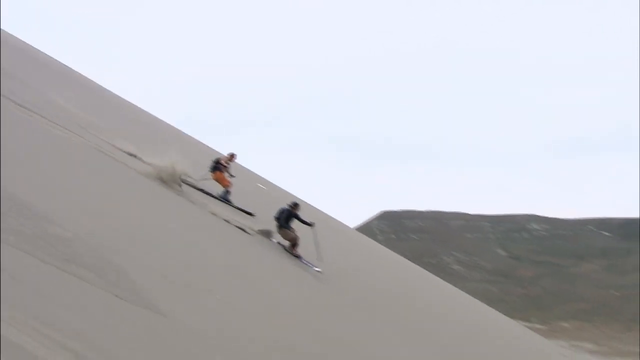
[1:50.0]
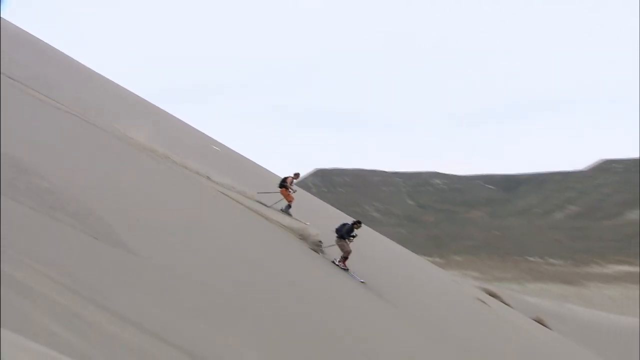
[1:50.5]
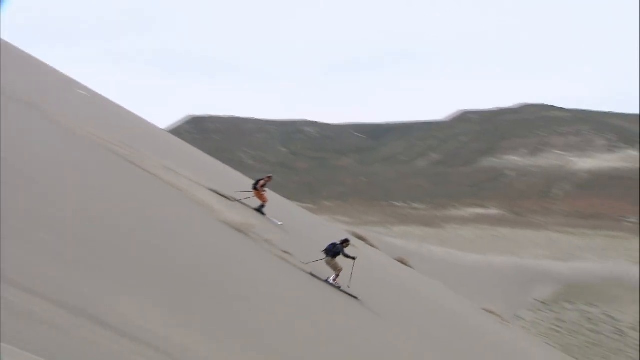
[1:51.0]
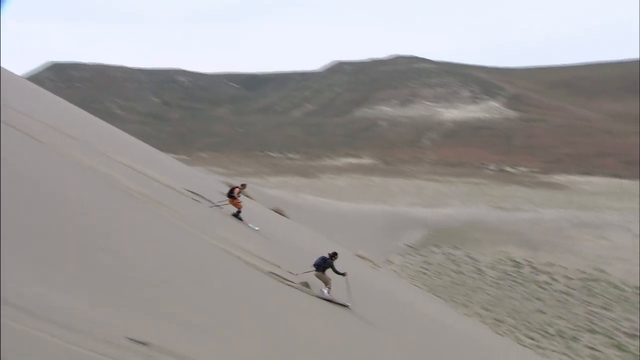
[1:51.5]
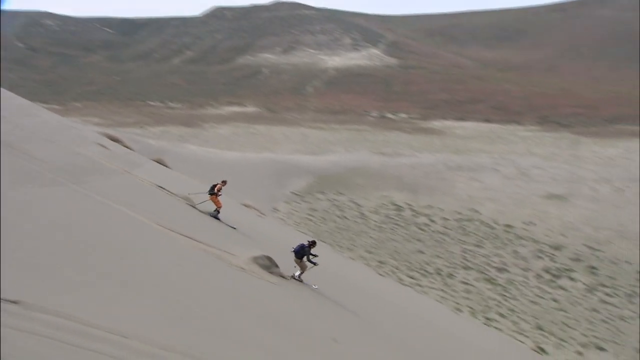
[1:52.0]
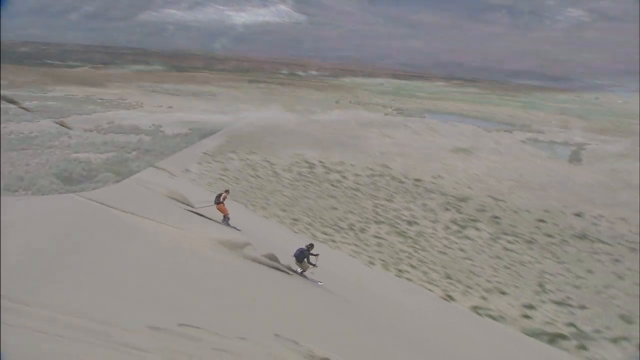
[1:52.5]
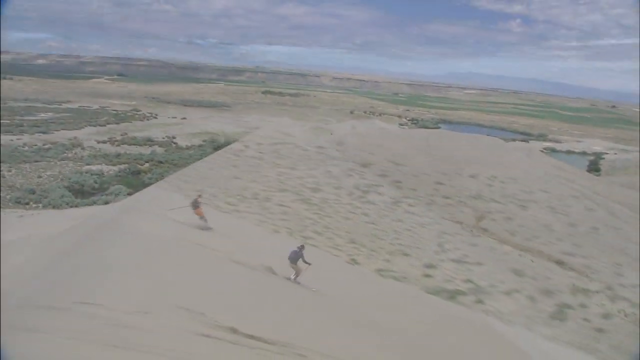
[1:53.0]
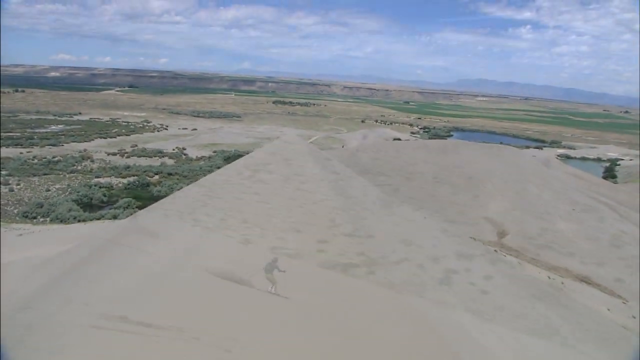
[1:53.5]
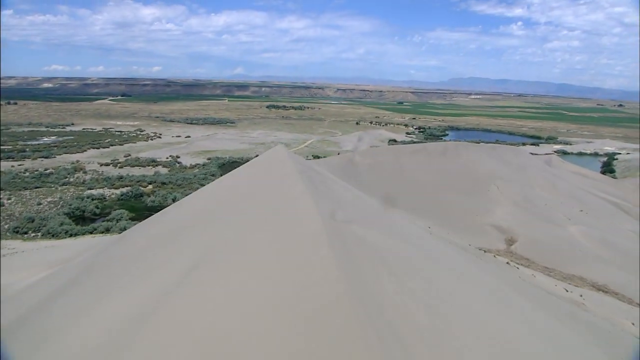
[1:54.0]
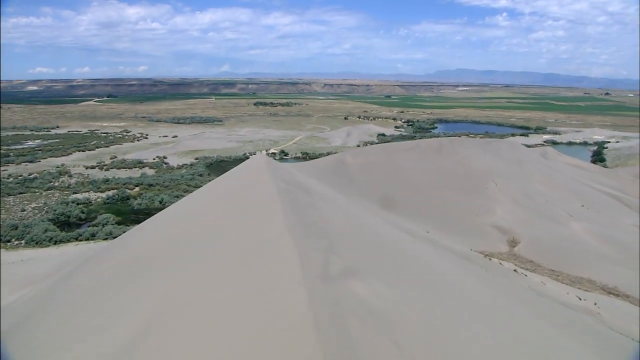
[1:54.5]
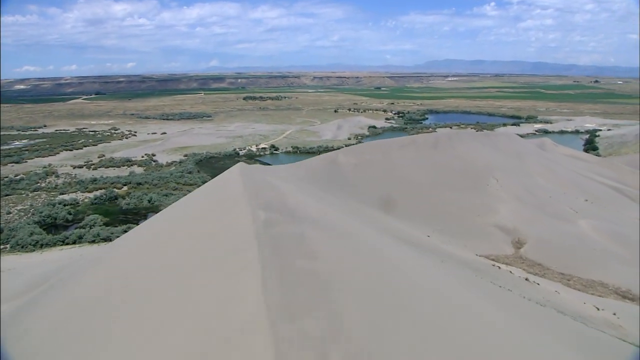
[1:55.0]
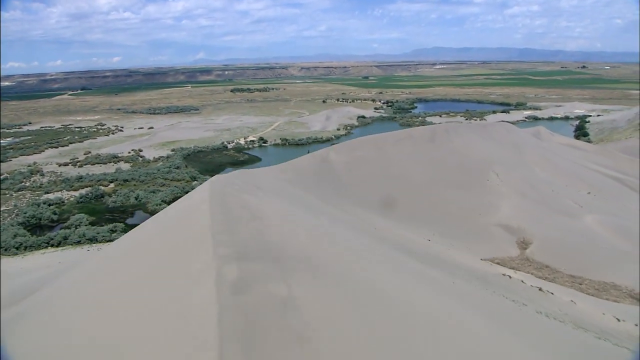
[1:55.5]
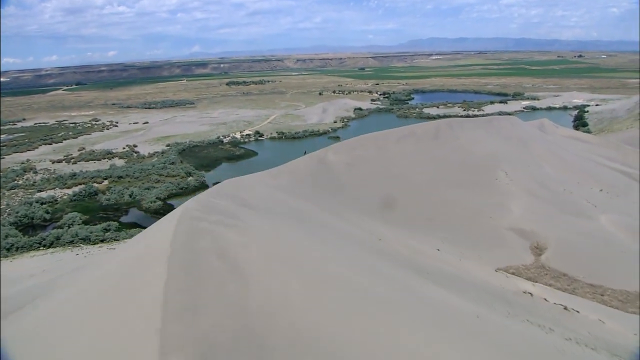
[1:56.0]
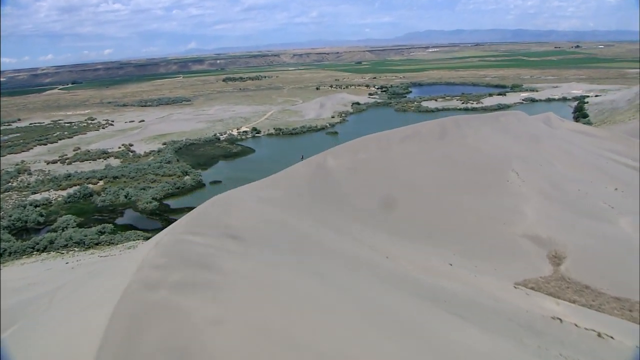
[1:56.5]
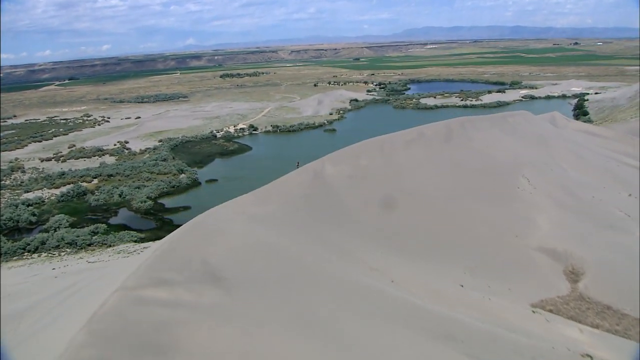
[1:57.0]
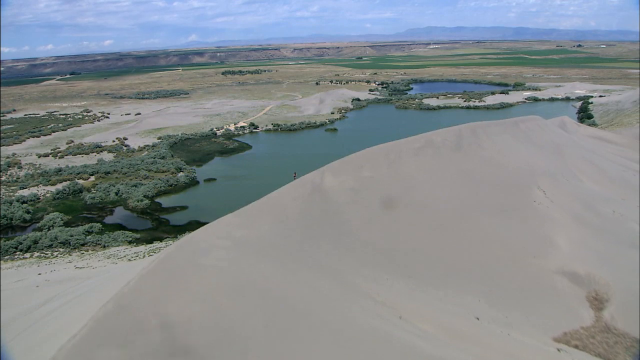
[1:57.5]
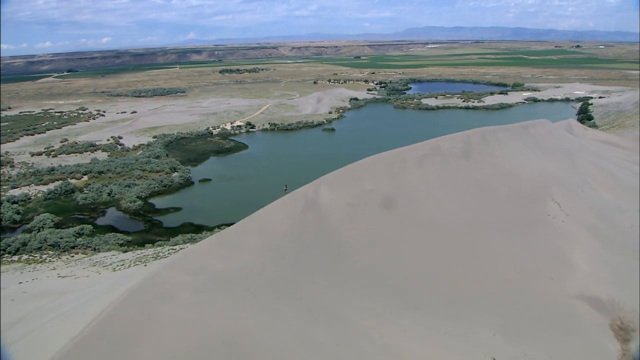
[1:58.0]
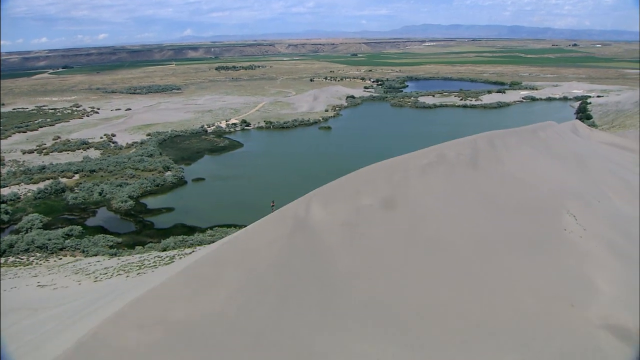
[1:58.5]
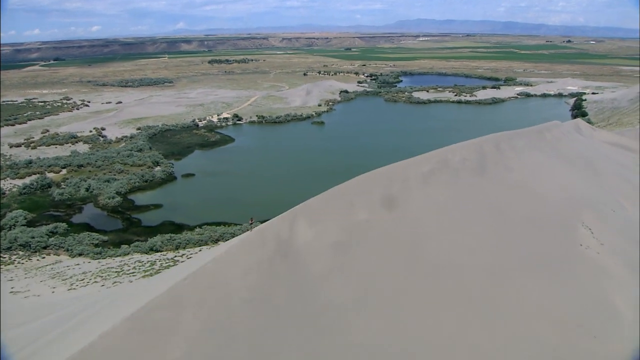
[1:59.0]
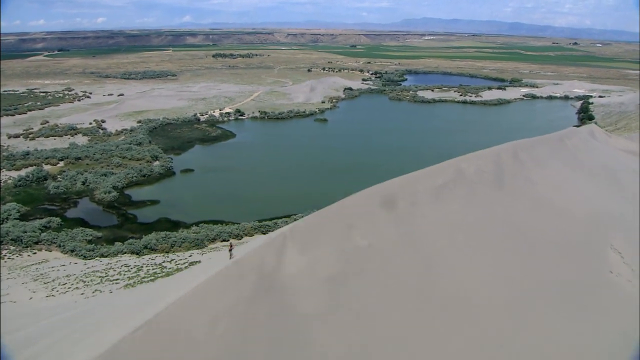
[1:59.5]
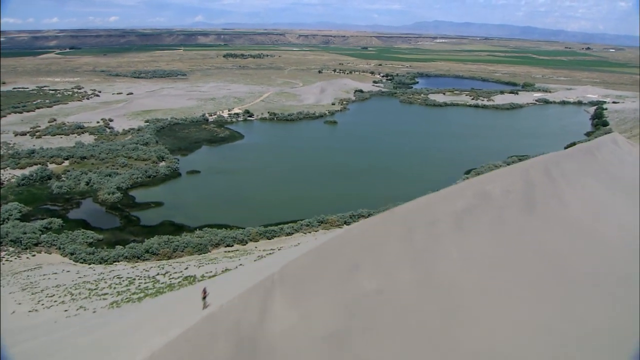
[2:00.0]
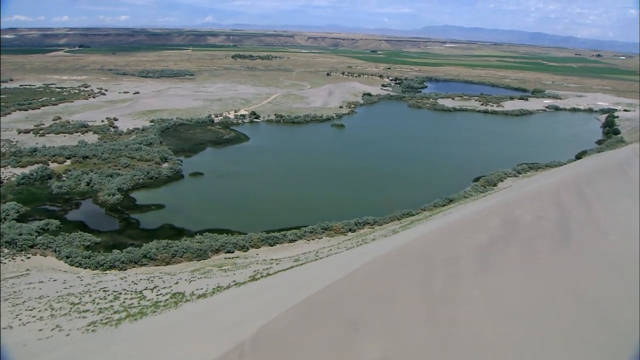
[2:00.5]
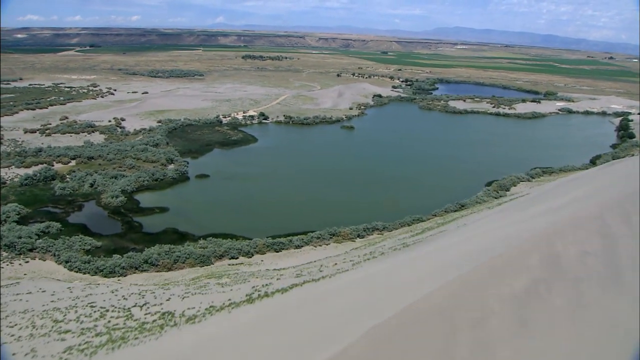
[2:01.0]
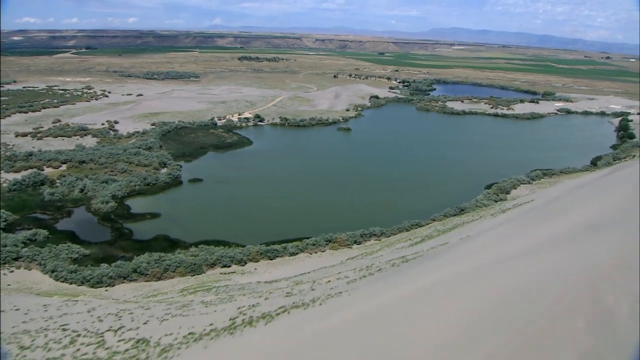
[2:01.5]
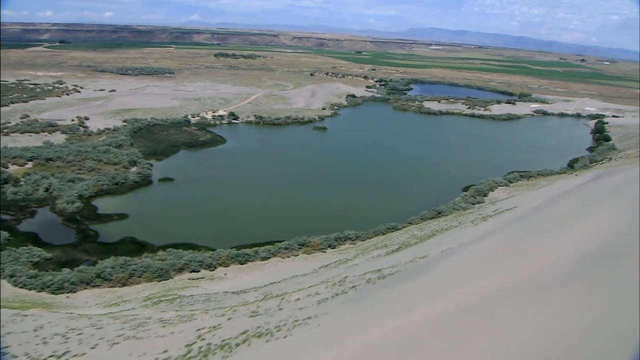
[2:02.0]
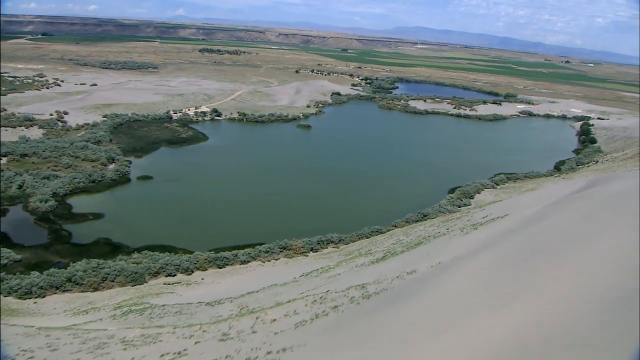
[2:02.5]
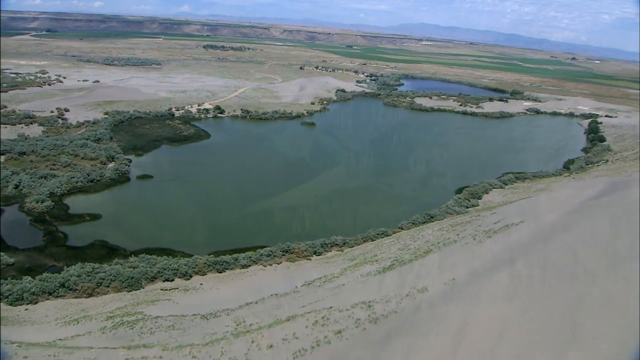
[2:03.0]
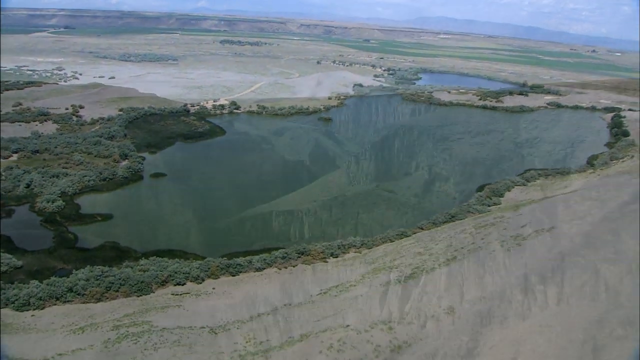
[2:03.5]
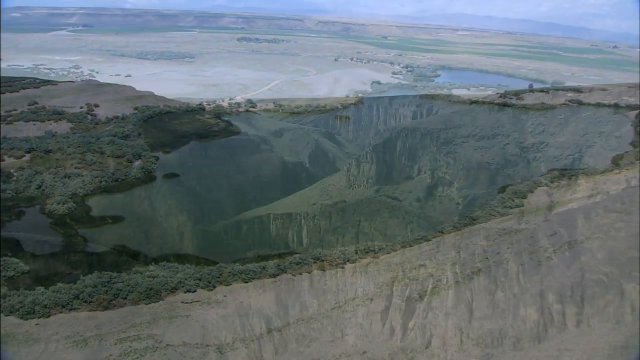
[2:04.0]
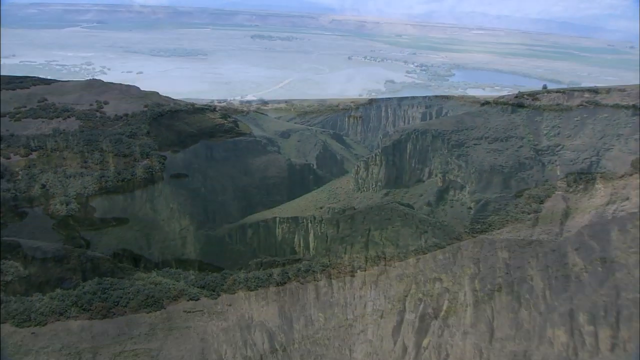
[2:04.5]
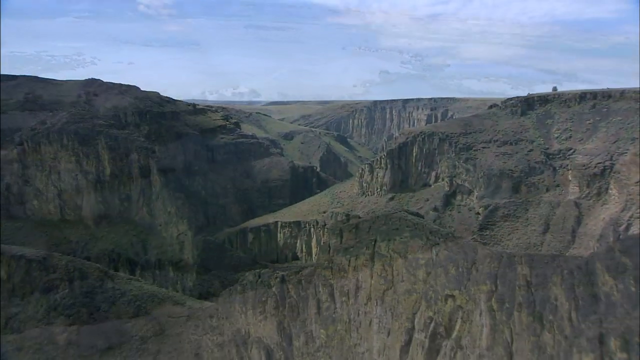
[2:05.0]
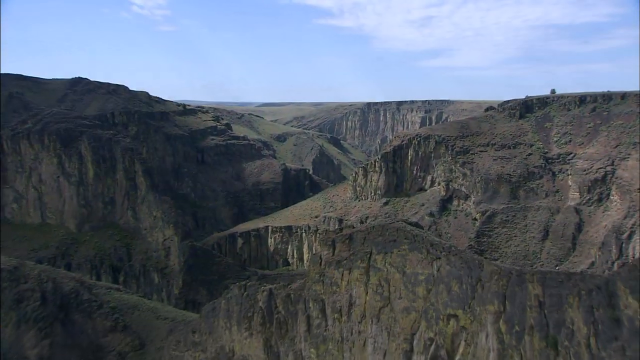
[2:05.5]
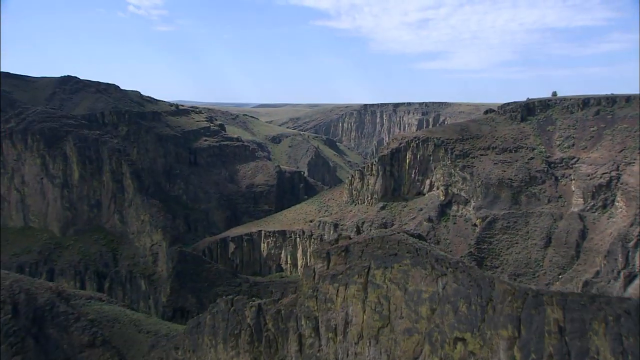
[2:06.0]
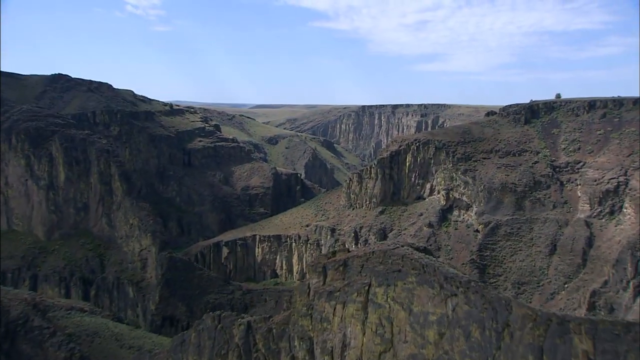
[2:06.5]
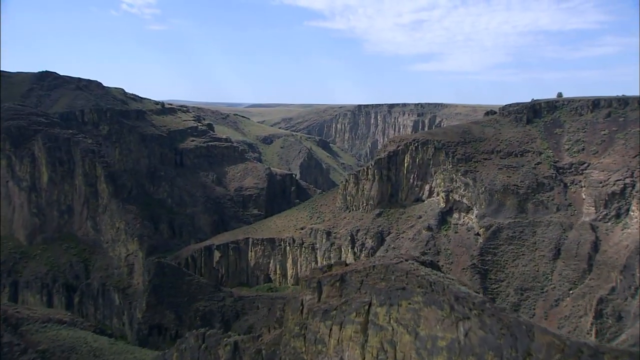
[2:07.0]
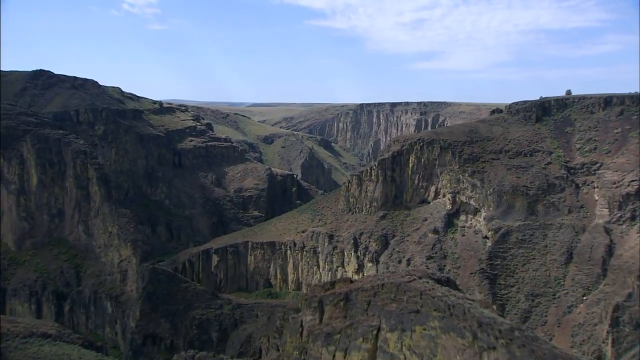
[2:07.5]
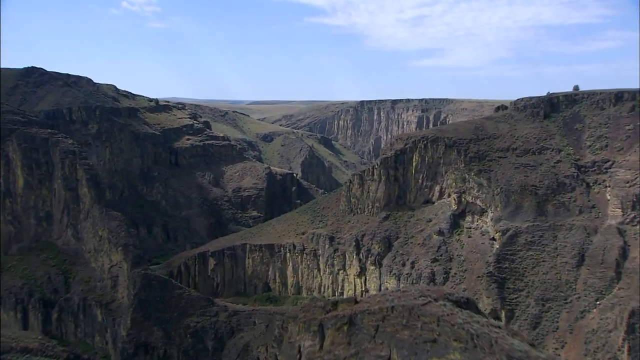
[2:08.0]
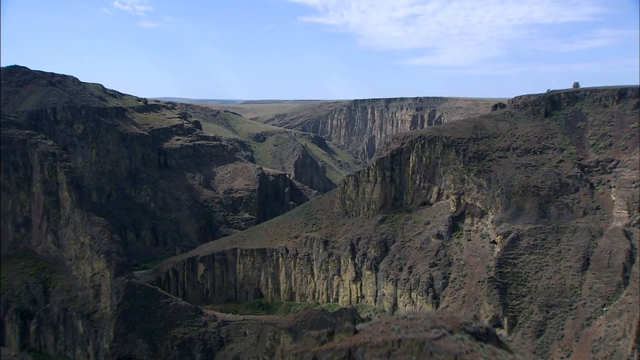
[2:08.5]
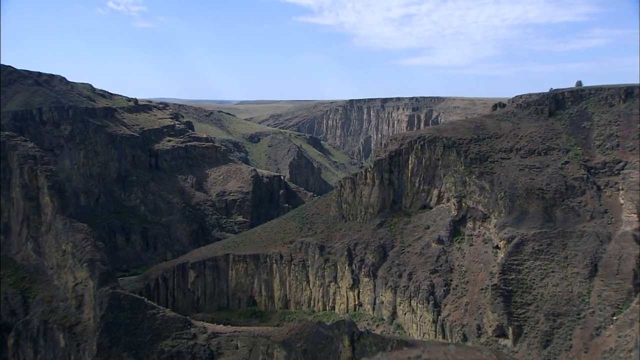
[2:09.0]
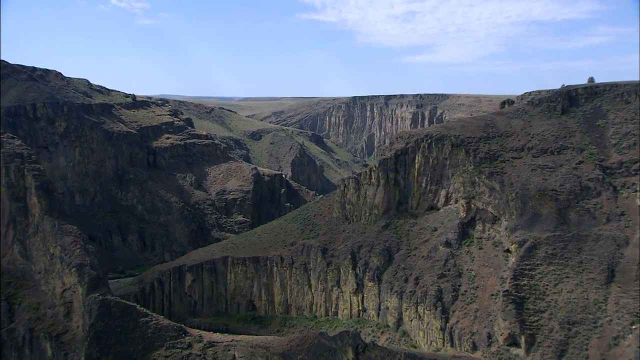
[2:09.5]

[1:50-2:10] Two skiers go down the side of the desert mountain, seen from a far-away side angle, and continue downward. Next is the point of view of one of the skiers approaching the top edge of the mountain; out in the distance there appears to be a small lake, with lots of field in the background in a very far-away view, showing they are high up on the mountain. The camera switches to drone footage of the edges of brown mountains under a light blue sky, with some clouds on the right side of the screen. The camera continues to move inward, capturing the mountainous scenery.